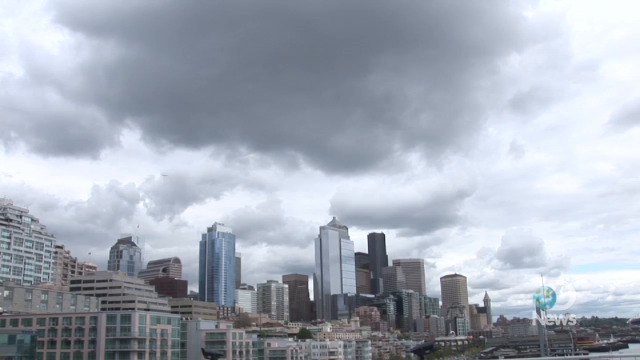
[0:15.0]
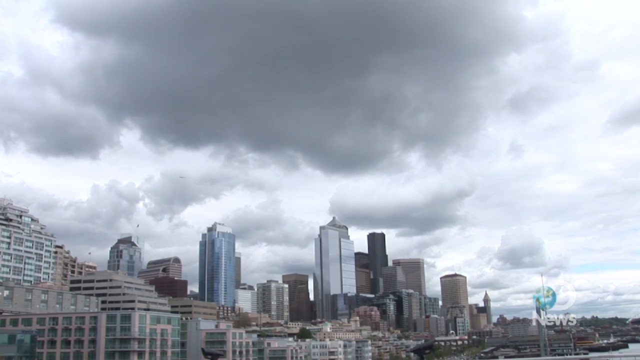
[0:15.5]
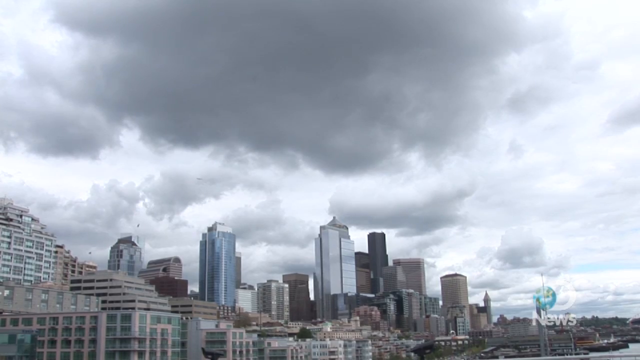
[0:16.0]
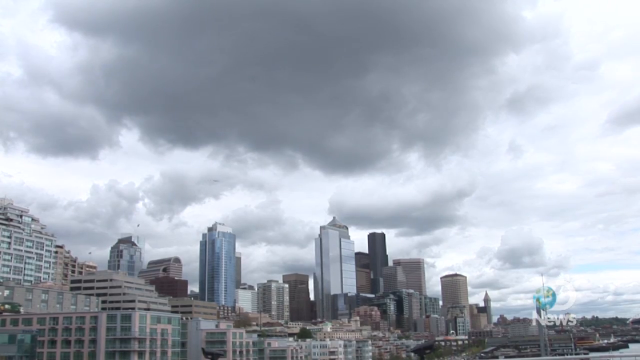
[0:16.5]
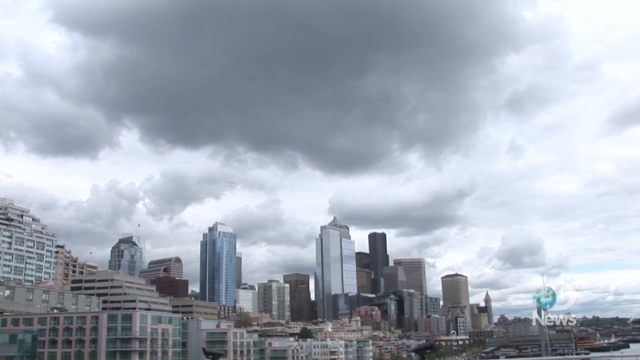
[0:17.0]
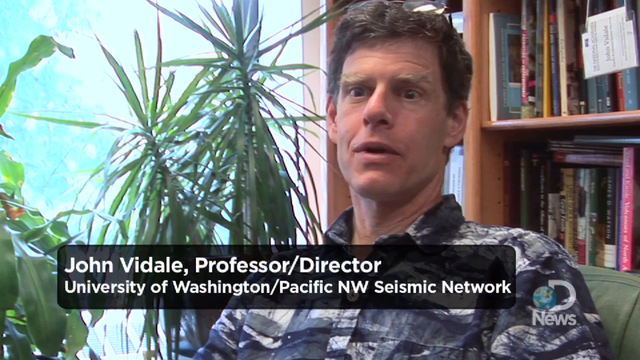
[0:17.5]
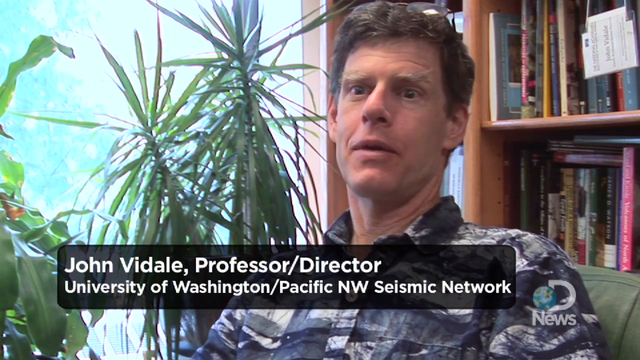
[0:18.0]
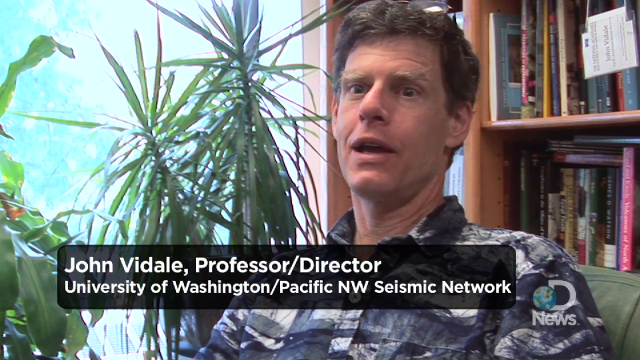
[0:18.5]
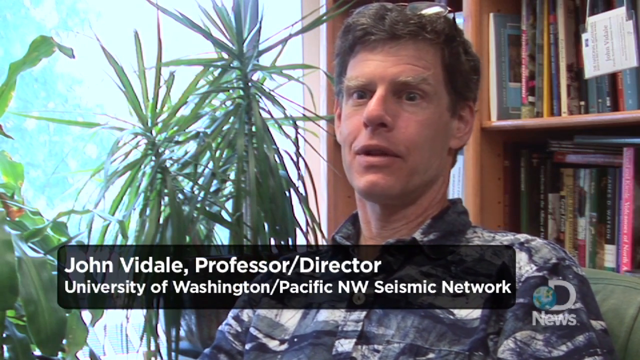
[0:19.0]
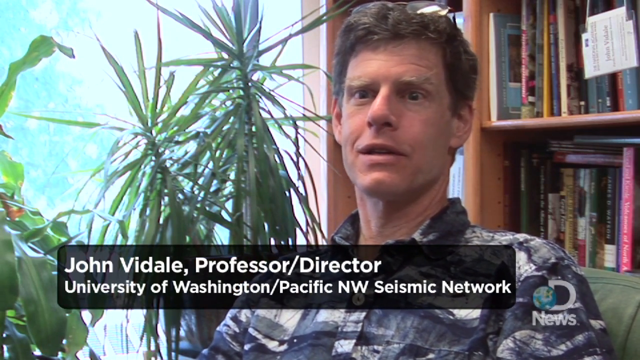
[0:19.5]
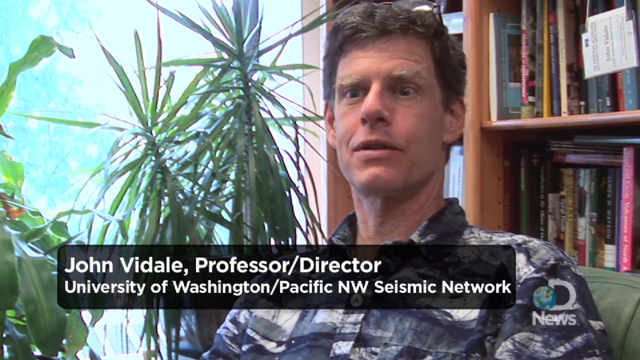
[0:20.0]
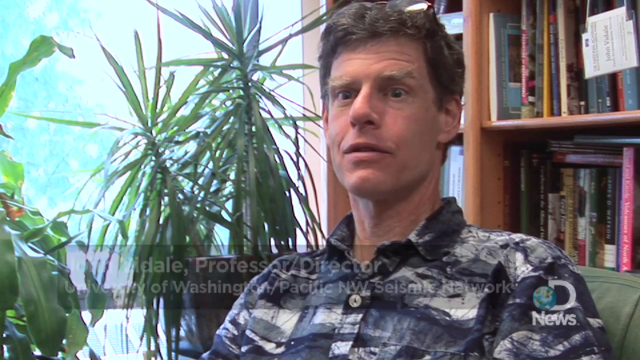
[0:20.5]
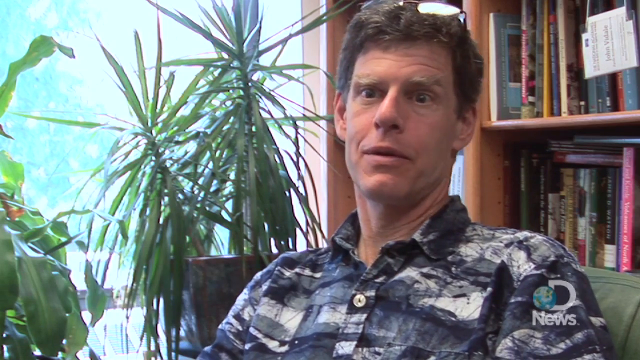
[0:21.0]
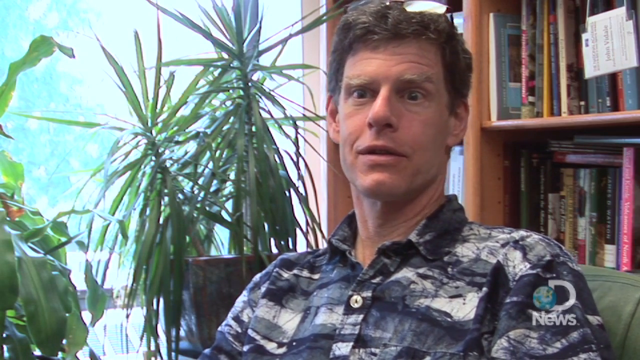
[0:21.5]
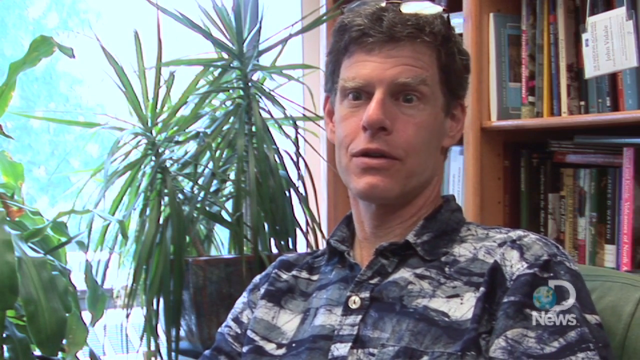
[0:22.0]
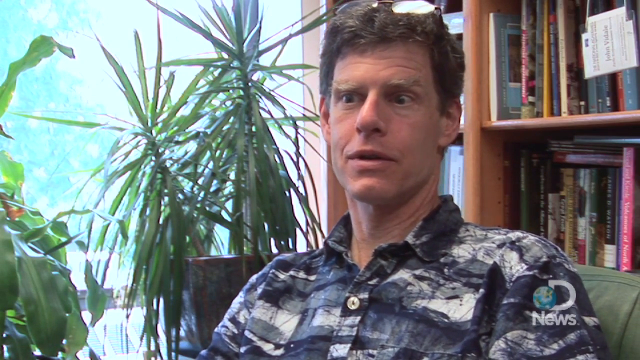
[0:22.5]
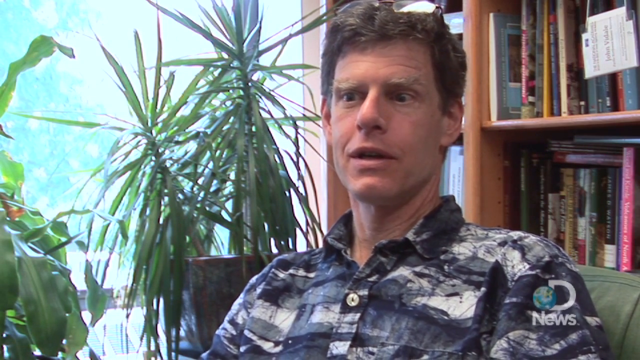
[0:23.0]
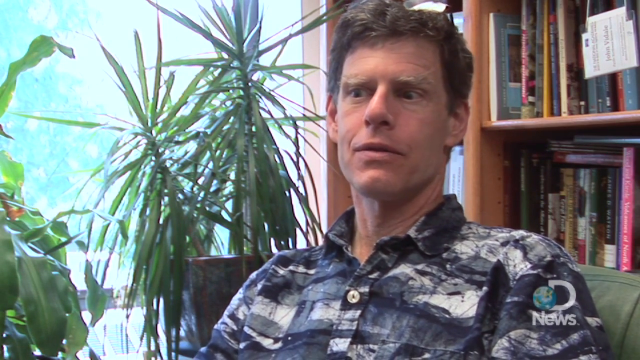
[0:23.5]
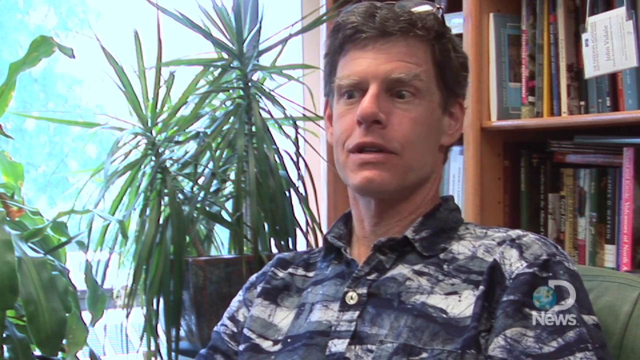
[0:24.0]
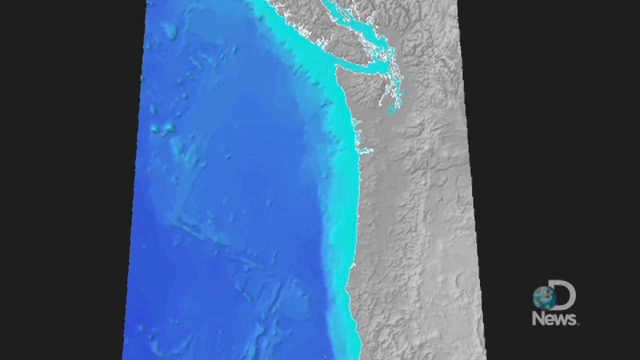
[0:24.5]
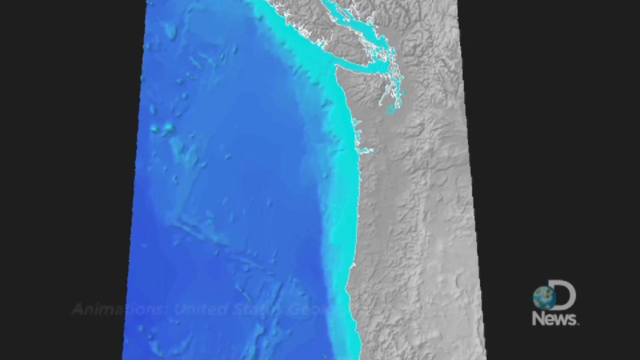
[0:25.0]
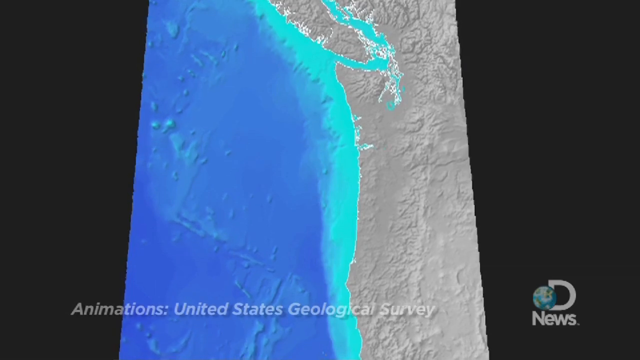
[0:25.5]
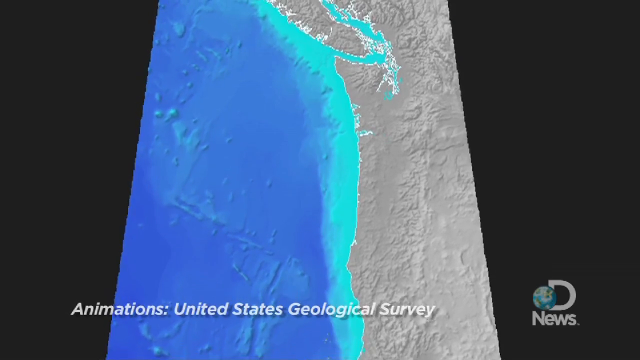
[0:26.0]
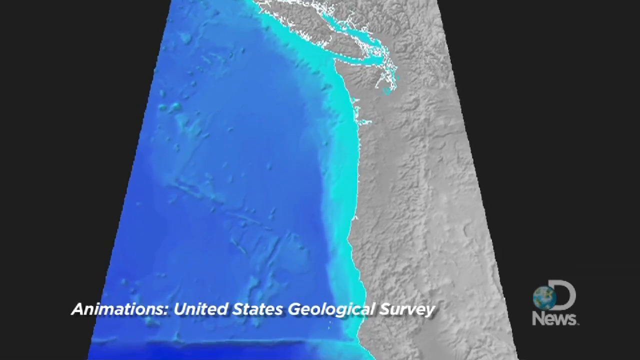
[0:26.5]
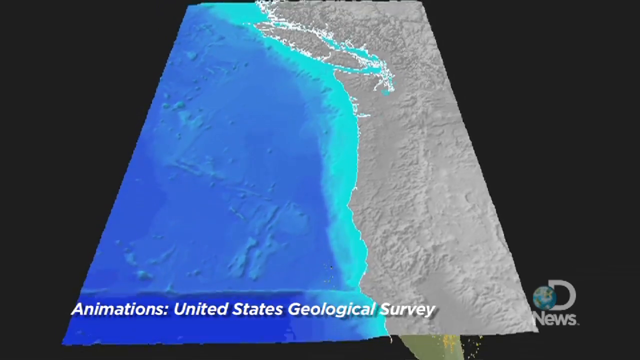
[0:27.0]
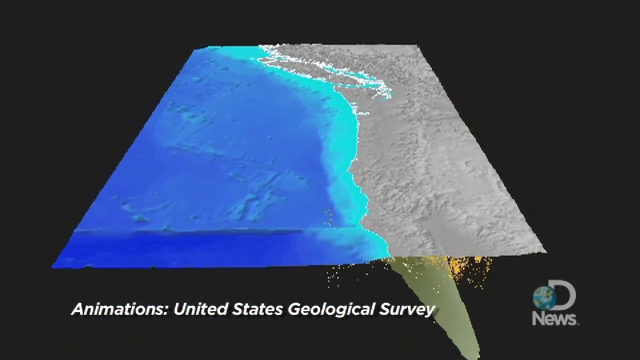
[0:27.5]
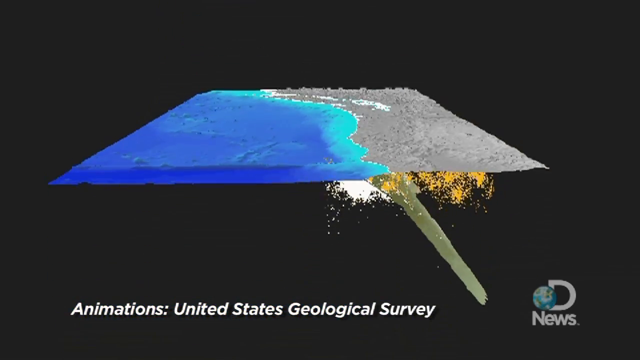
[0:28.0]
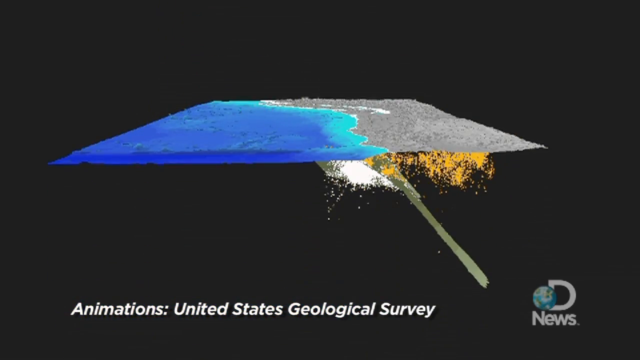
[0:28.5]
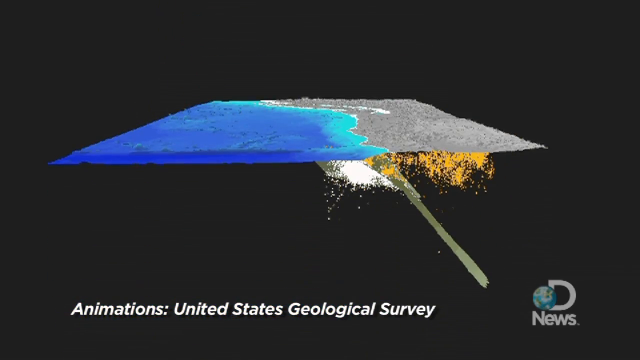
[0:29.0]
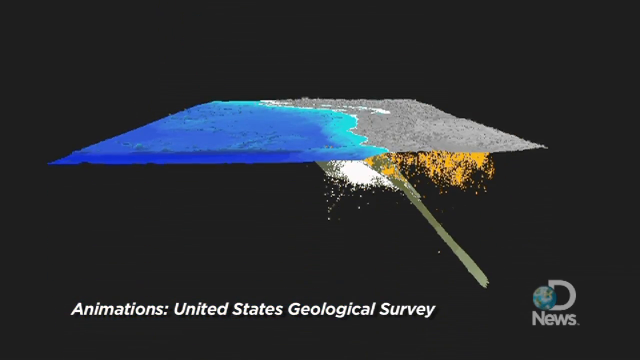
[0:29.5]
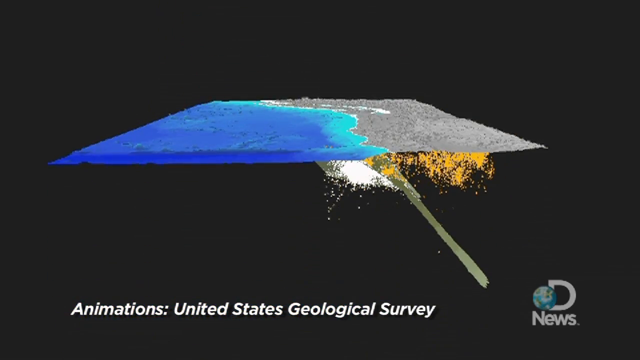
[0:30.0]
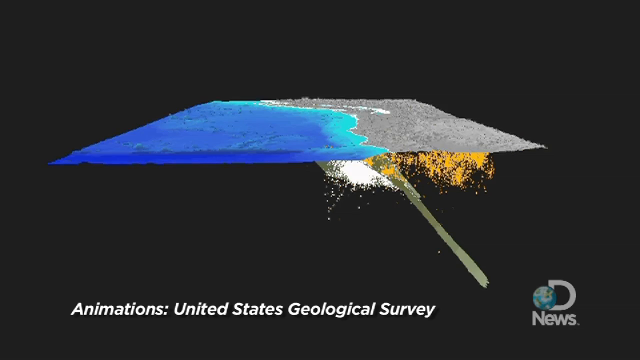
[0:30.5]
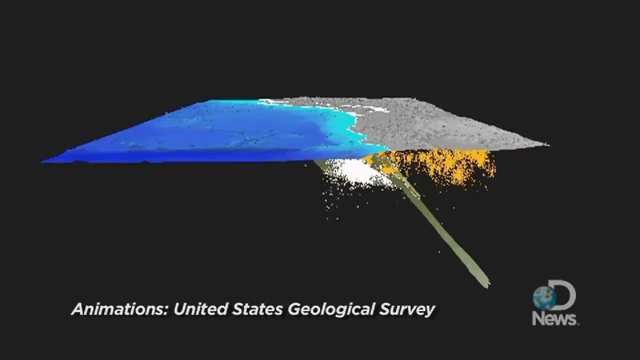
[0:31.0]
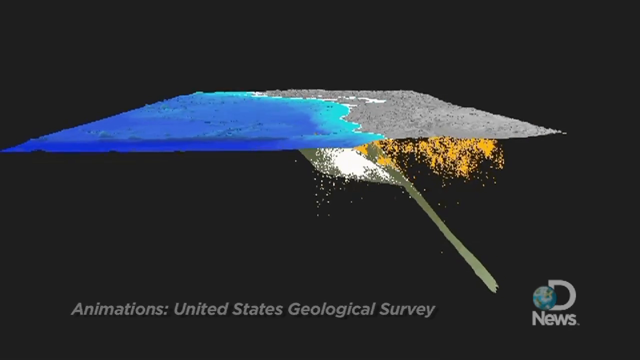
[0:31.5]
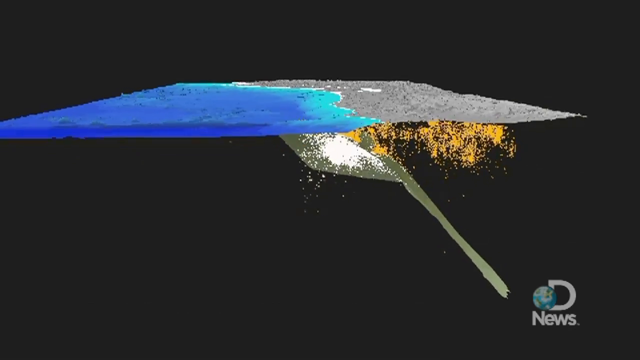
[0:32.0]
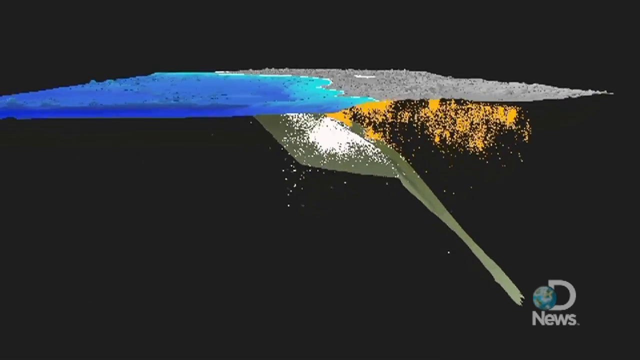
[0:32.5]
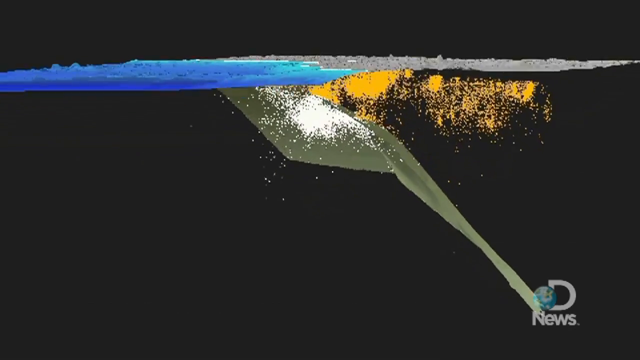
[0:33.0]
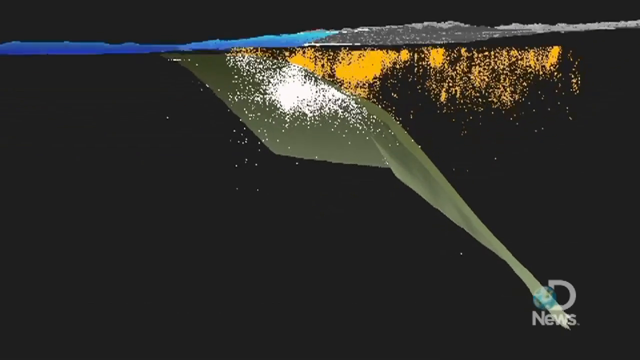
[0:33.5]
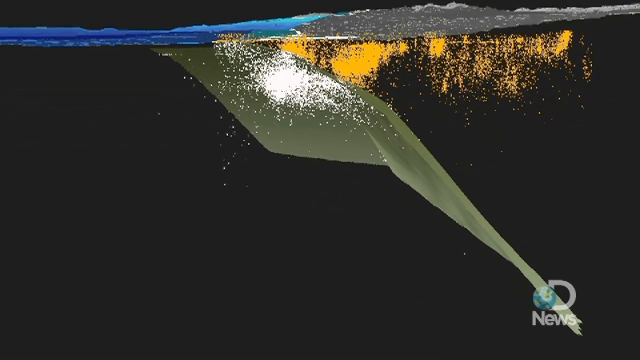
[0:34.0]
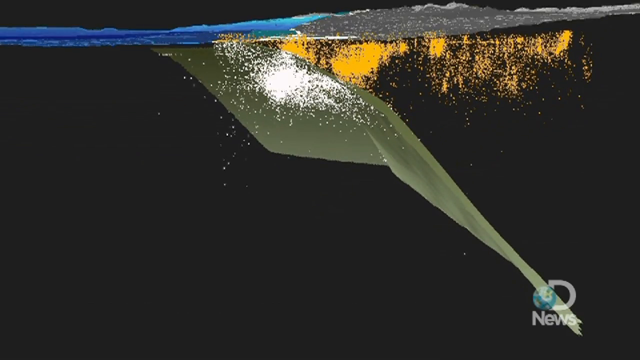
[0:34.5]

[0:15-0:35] The 3D animation from the United States Geological Survey shows the fault line that runs underneath, along with the coastline. John Vidalel, professor and director of the University of Washington Pacific Seismic Network Department, speaks about the animation model. The video is from Discovery News.